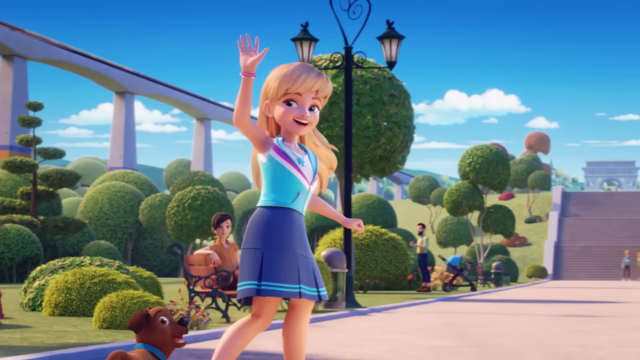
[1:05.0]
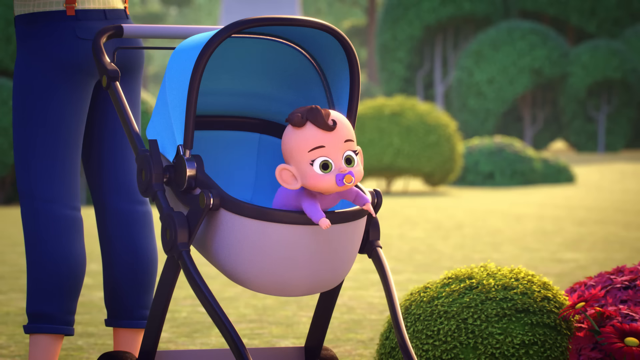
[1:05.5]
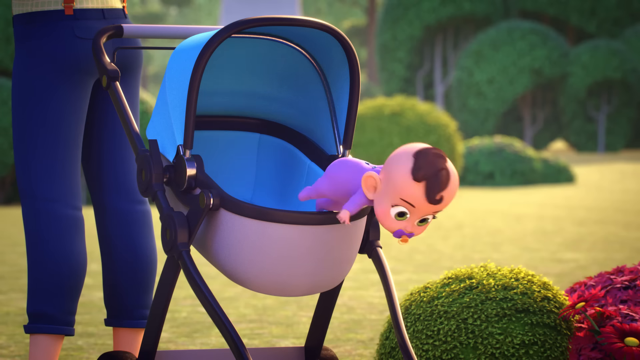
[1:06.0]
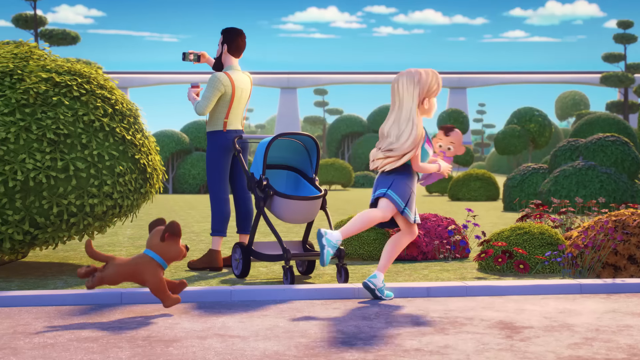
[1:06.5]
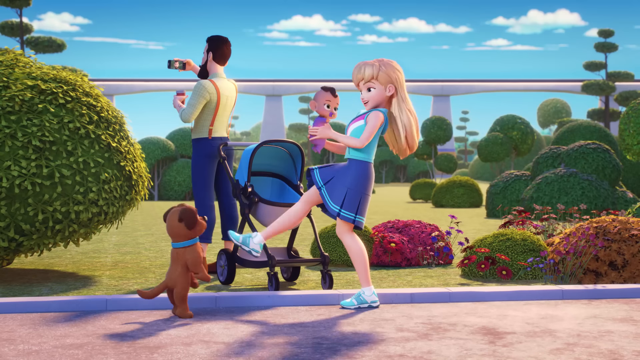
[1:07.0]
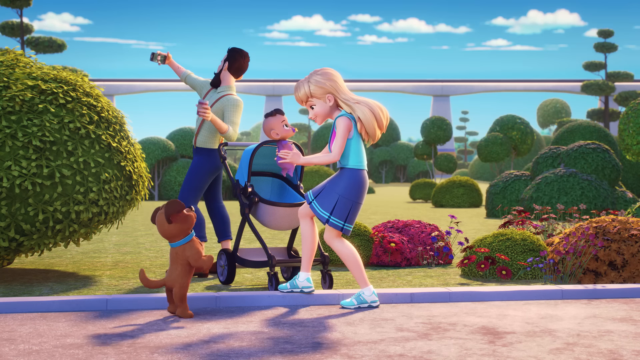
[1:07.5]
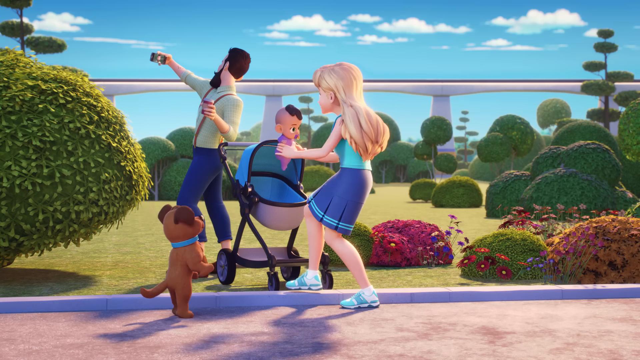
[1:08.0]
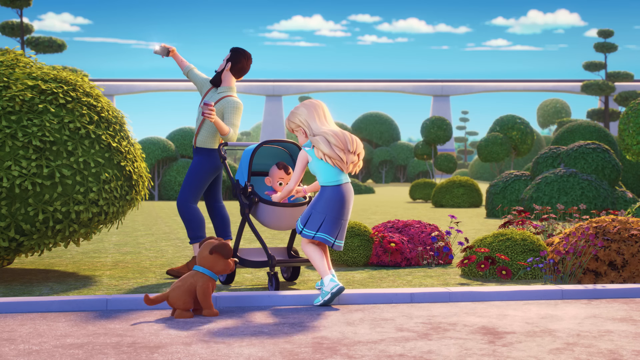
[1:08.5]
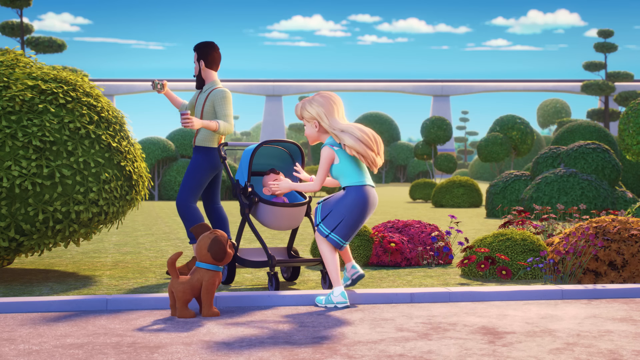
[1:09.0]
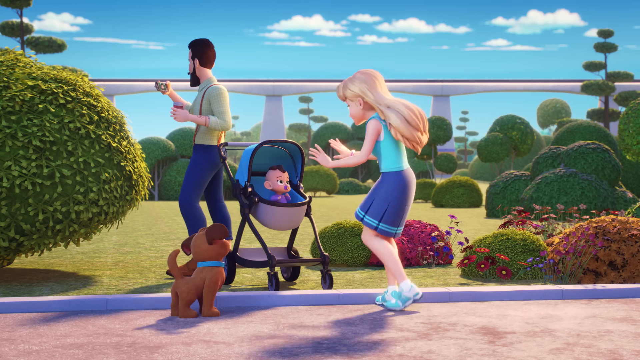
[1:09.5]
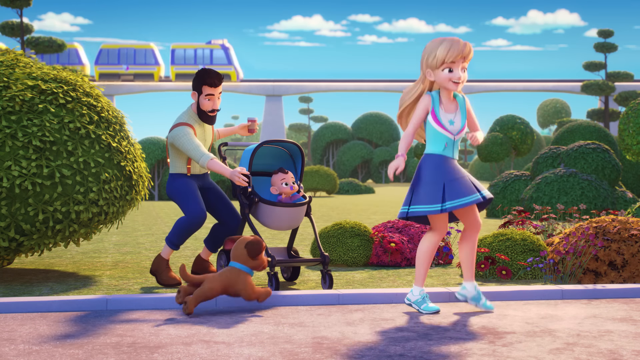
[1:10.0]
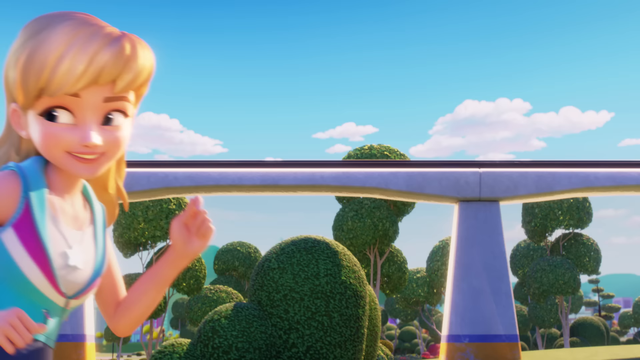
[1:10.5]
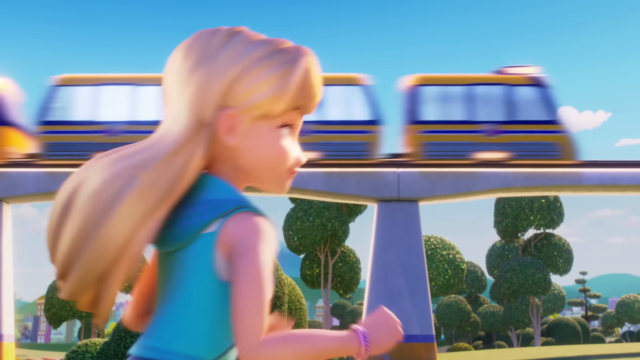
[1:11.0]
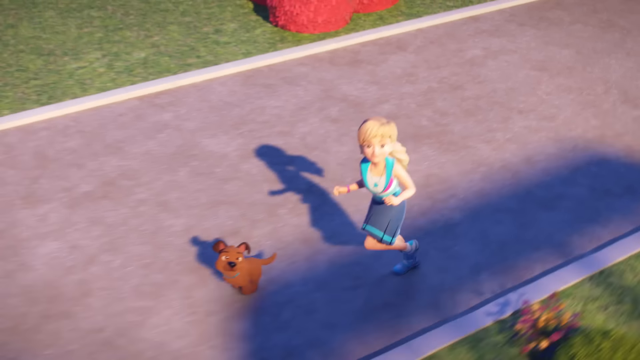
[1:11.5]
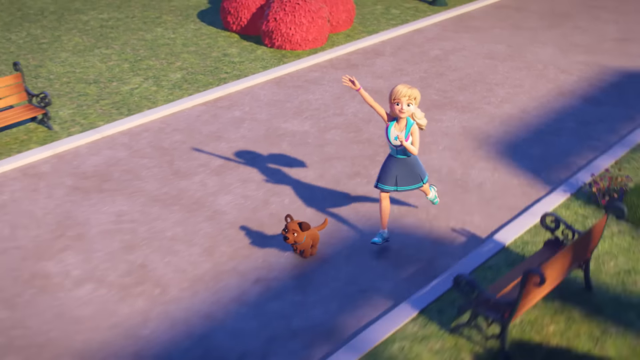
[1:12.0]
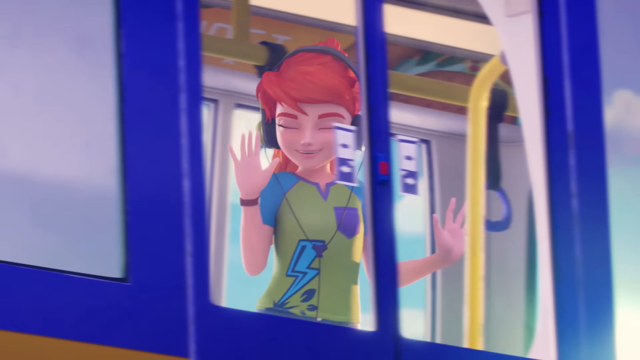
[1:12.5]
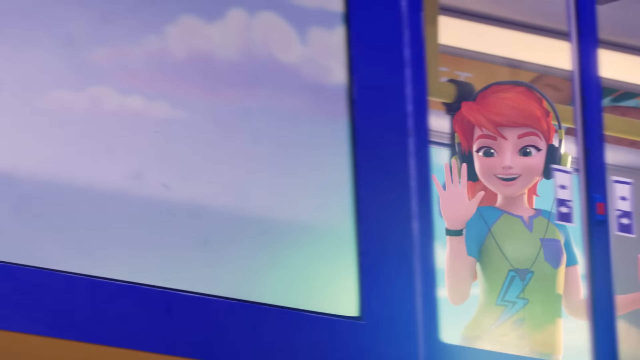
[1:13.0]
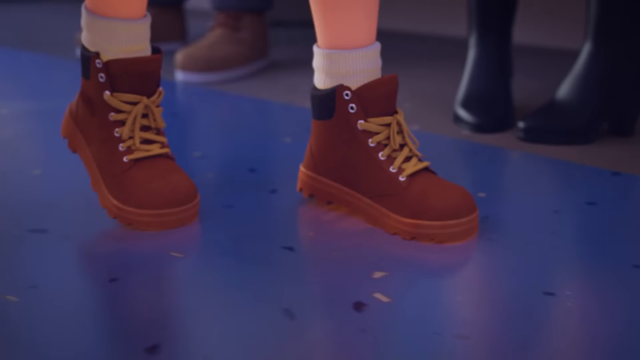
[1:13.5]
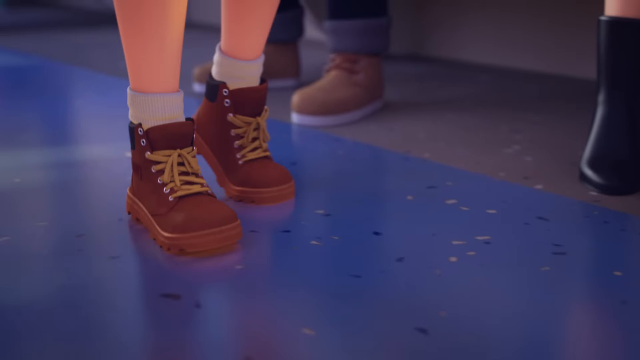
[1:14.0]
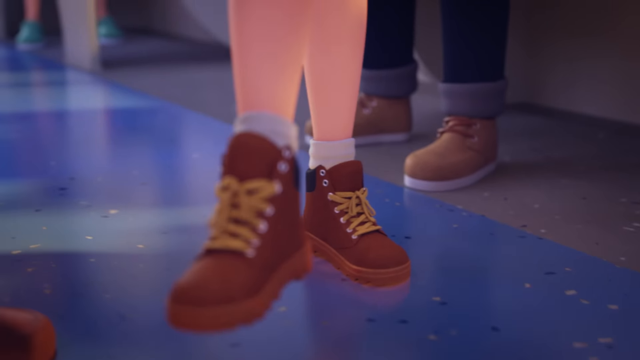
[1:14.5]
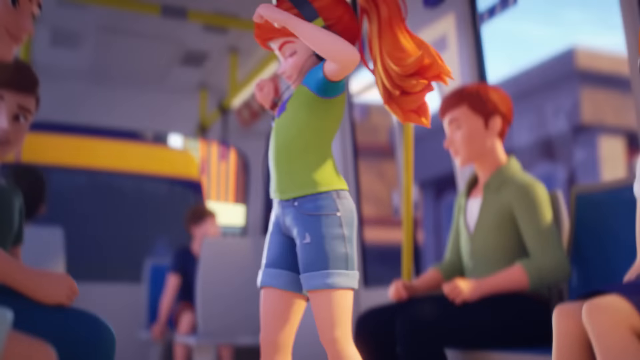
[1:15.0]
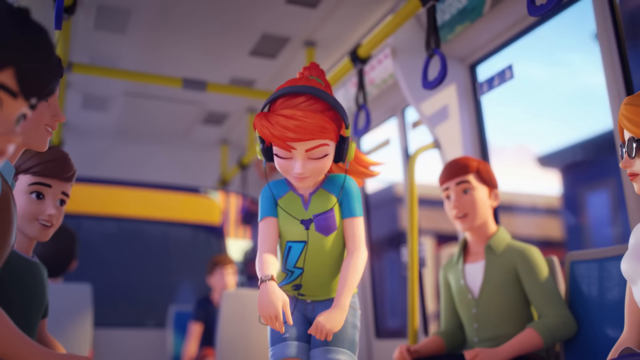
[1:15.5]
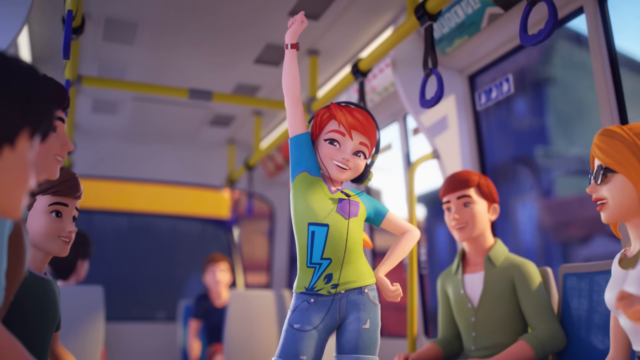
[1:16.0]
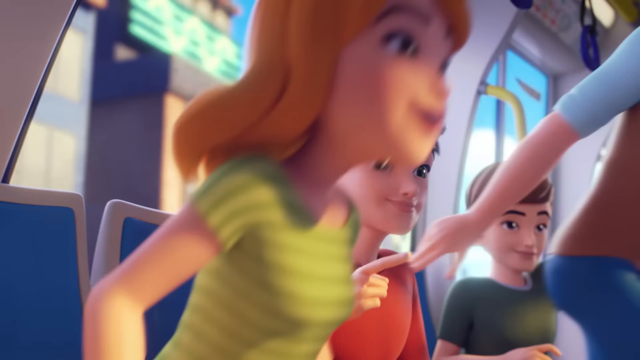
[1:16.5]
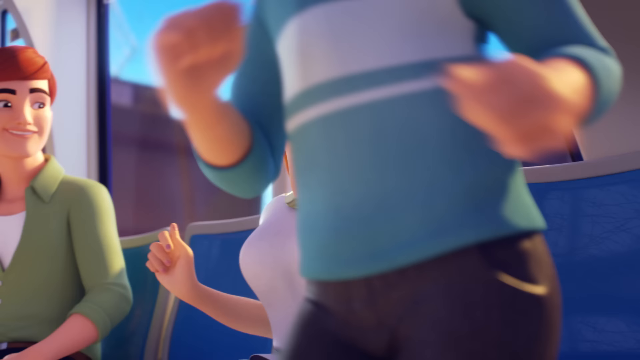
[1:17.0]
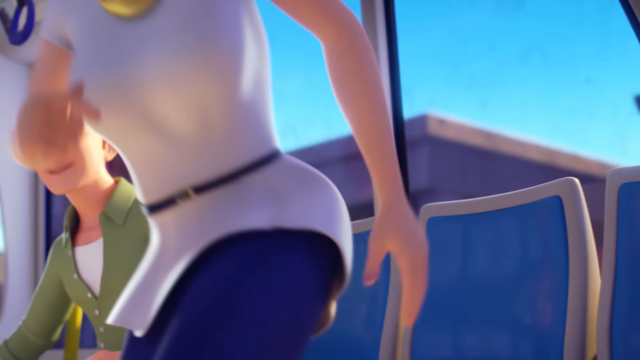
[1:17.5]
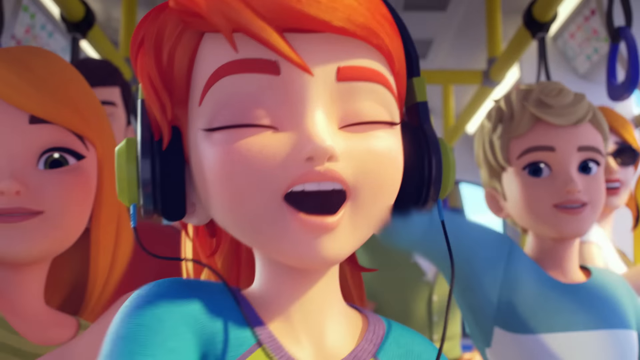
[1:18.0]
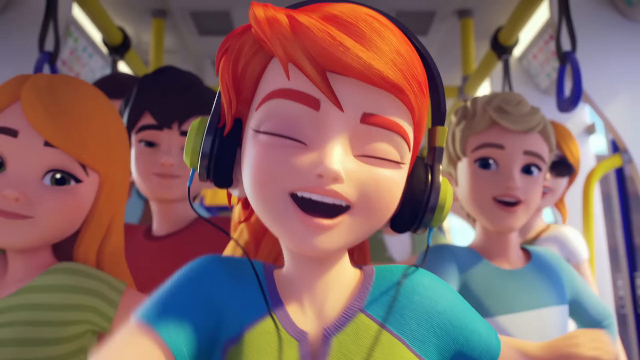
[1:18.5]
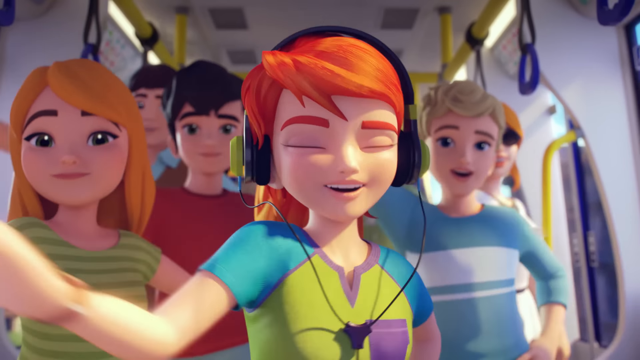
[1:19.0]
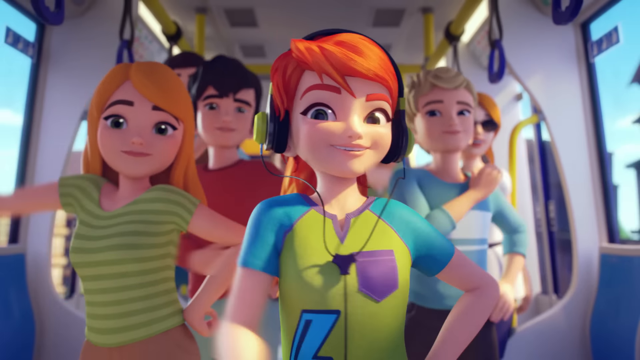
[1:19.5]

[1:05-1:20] Stephanie possibly bumped Andrea because she was rushing to save a baby coming out of a stroller while the father, with his back turned, takes a selfie. Stephanie saves the baby and waves at the train, where Mia is. Mia starts dancing on the train to her music, and the people on the train break into song and dance too.